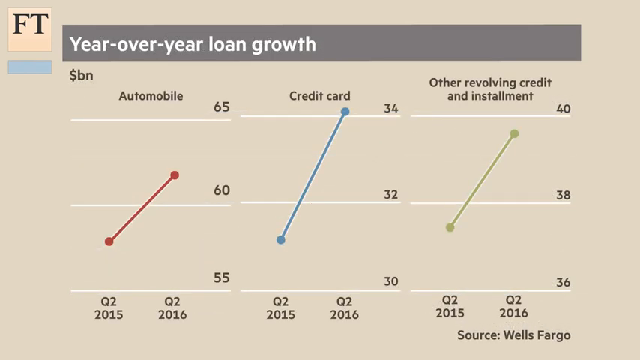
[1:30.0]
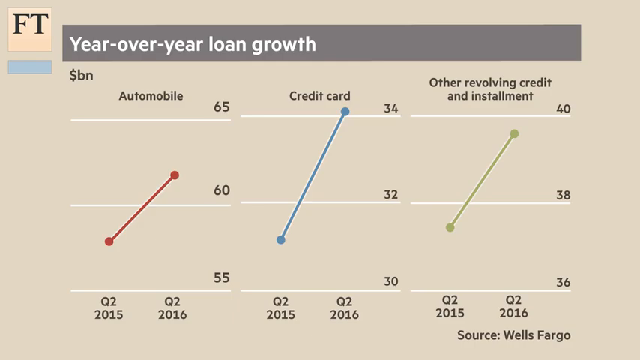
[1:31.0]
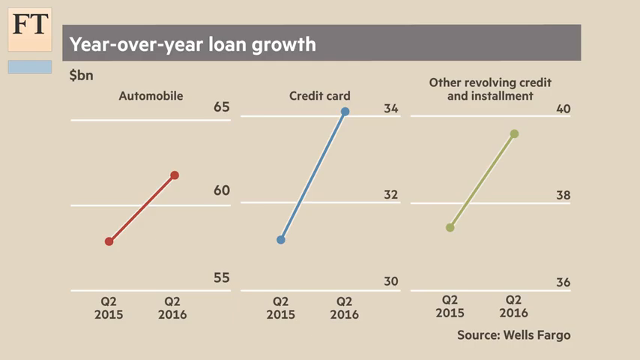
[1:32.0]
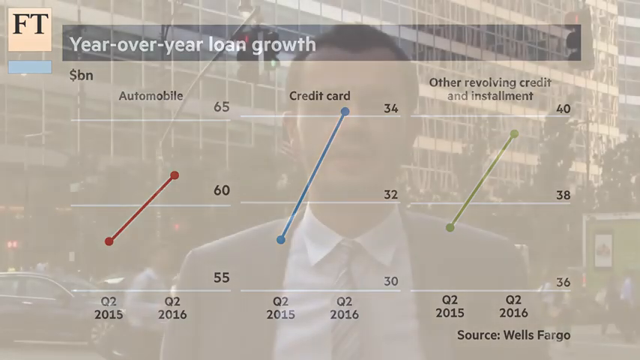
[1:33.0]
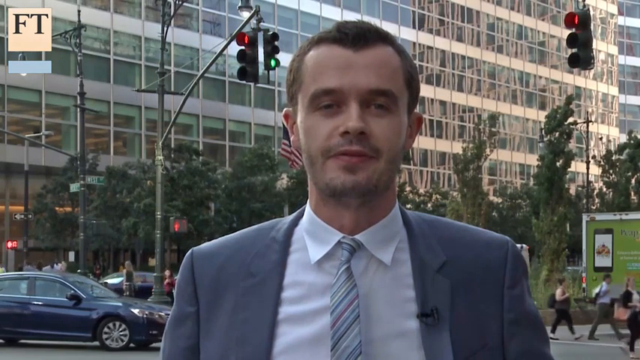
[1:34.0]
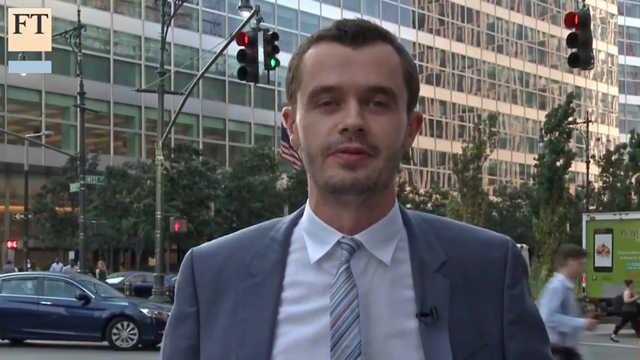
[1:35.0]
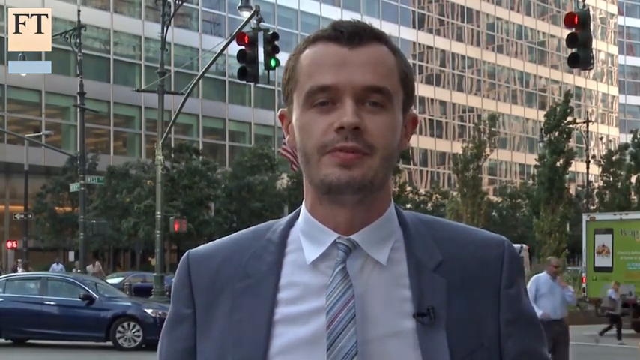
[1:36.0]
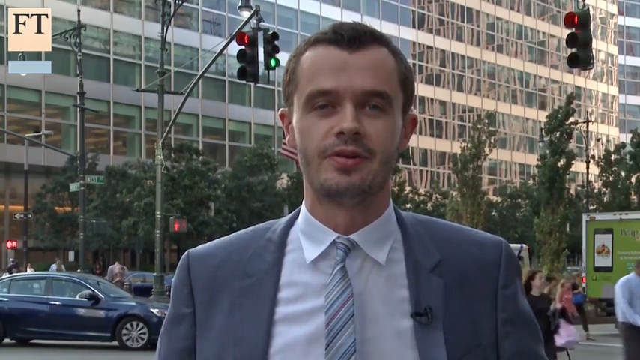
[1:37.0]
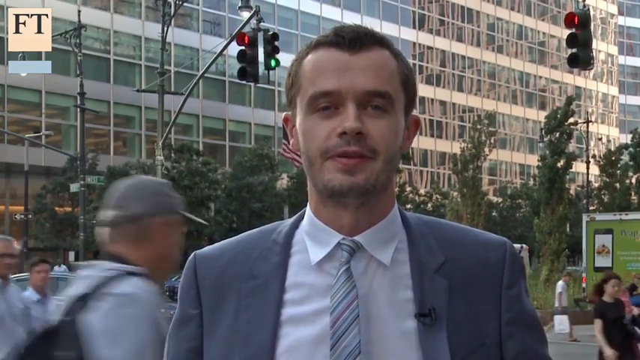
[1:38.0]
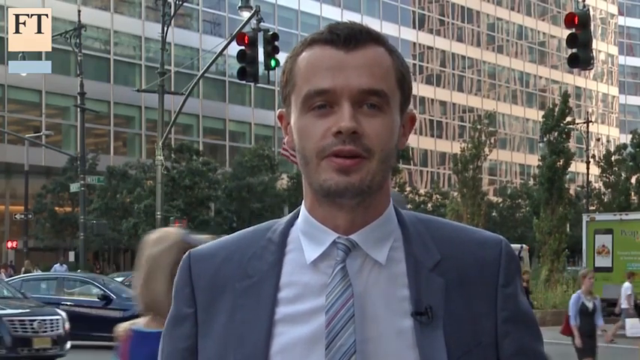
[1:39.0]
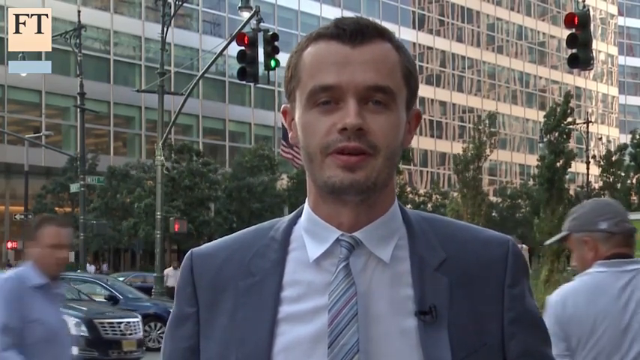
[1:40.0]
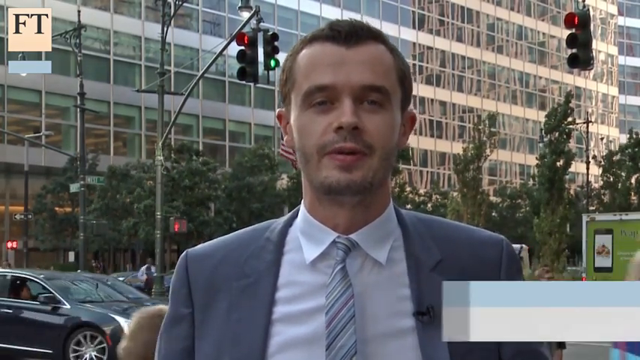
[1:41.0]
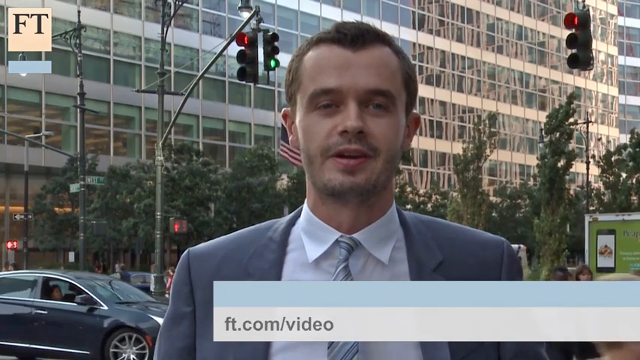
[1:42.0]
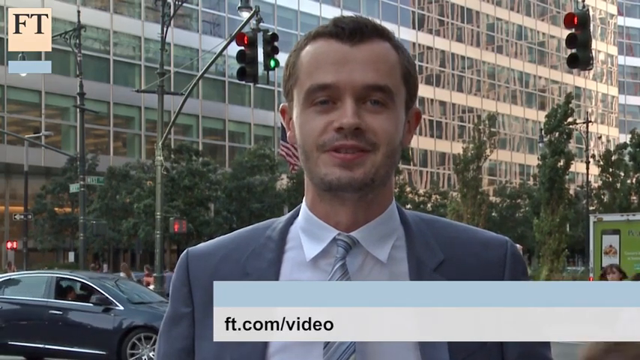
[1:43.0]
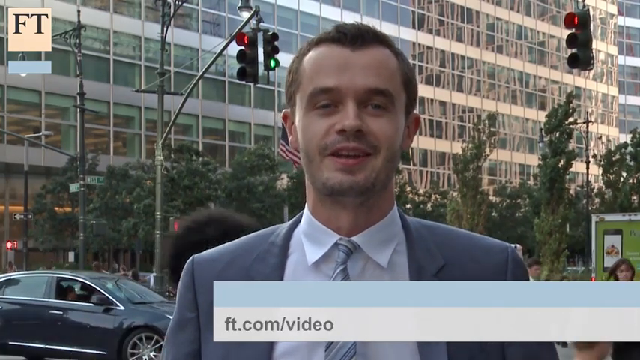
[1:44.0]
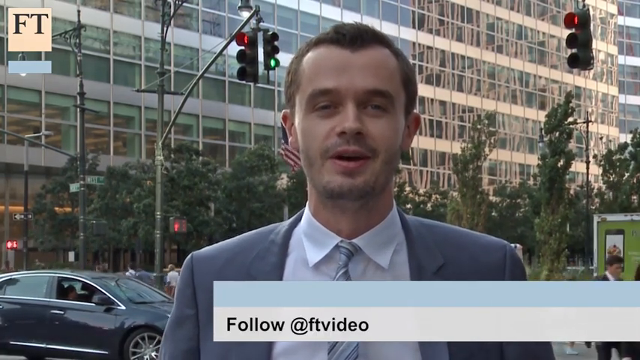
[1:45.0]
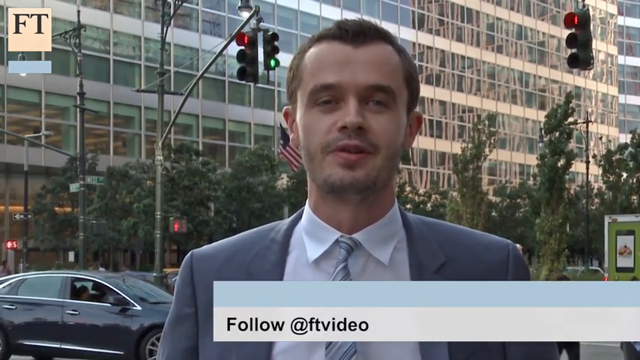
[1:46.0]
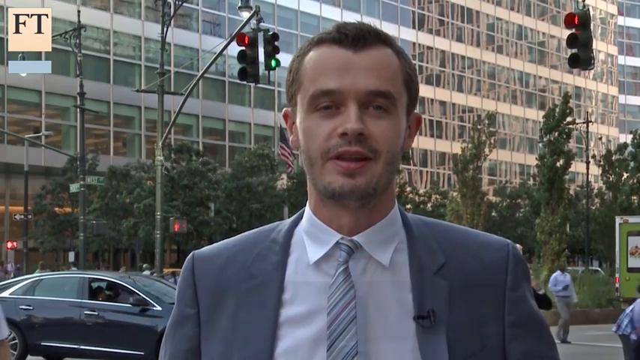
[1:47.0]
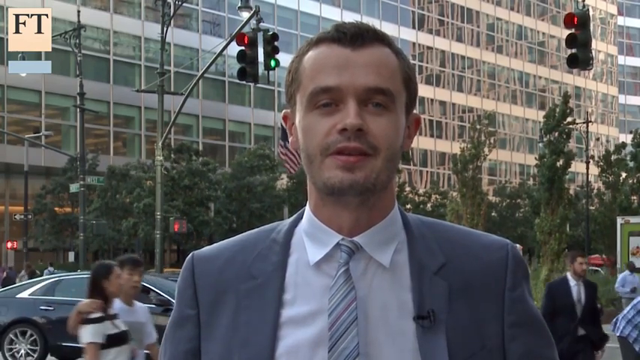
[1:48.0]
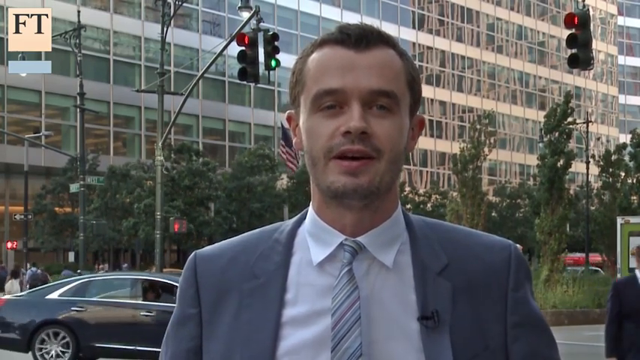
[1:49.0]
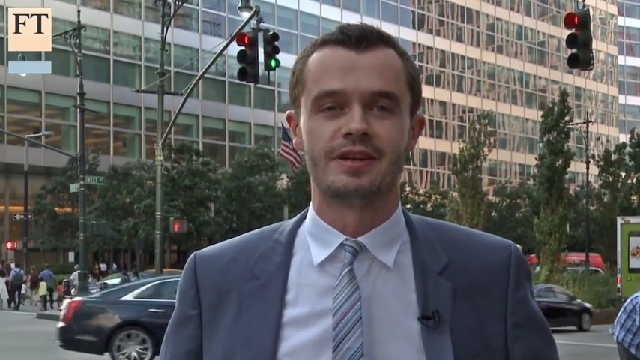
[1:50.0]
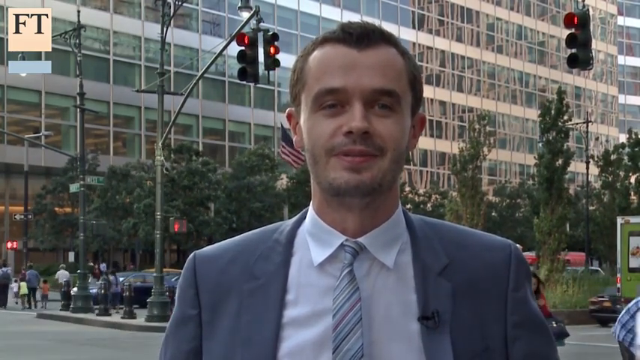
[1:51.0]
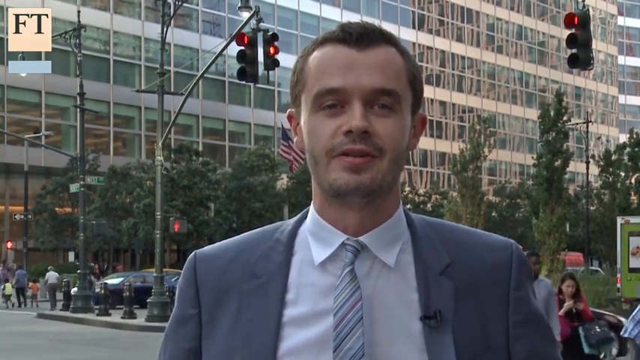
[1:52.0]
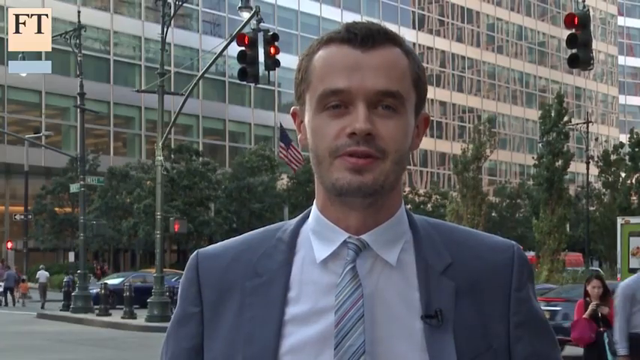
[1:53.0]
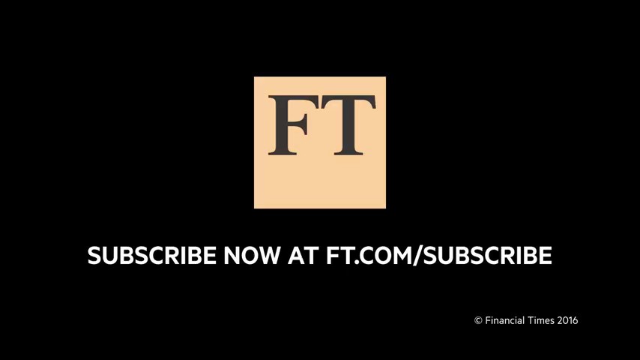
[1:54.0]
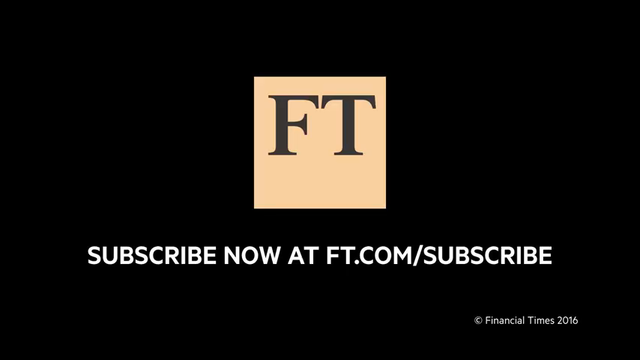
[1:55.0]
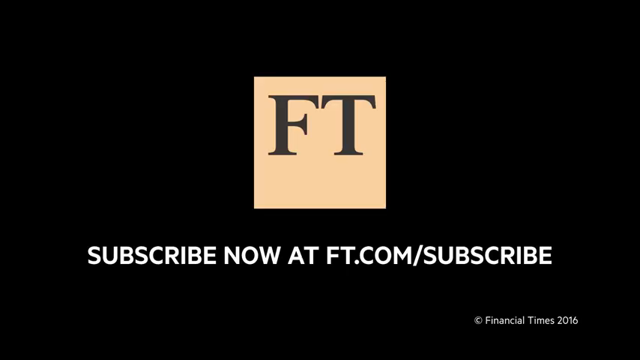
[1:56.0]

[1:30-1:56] A graph titled "year-over-year loan growth" appears, with "FT" in a box in the upper left-hand corner. Its categories are automobile, credit card, and other revolving credit and installment. Automobile has increased slightly, shown by a red bar; credit card has increased a lot, shown by a blue bar; and other revolving credit and installment, a green bar, has also increased significantly. The financial reporter is then on a street corner, wearing a gray suit and a gray striped tie. People walk behind him, cars go by, and a green truck is in view behind him. A traffic light is directly behind him, and across the street are glass buildings. The video ends with "FT" in a tan box and the text "com/subscribe" on a black screen.